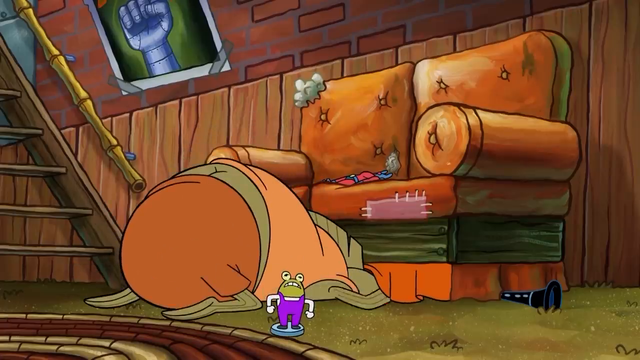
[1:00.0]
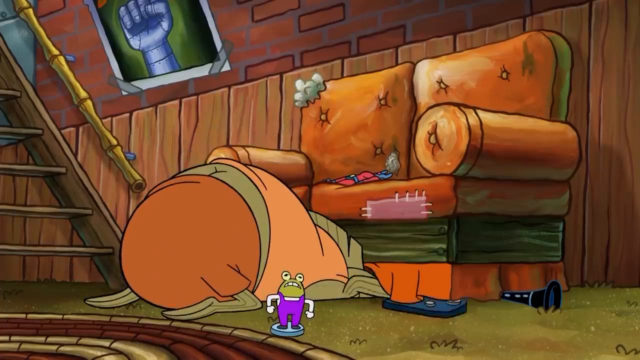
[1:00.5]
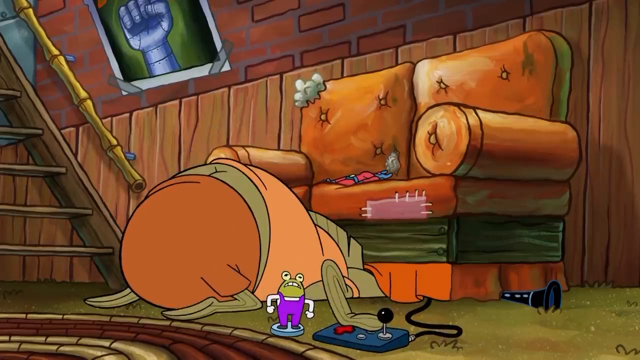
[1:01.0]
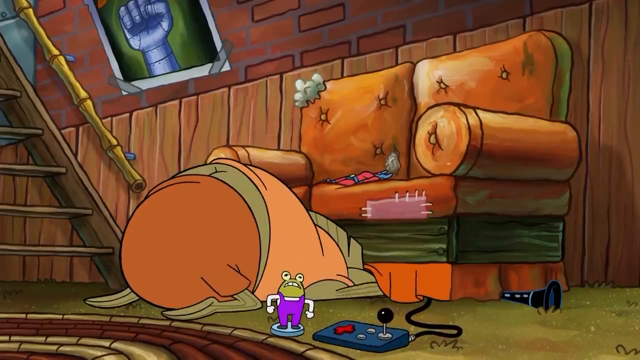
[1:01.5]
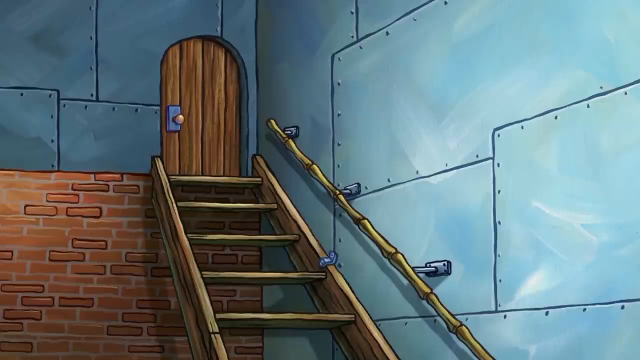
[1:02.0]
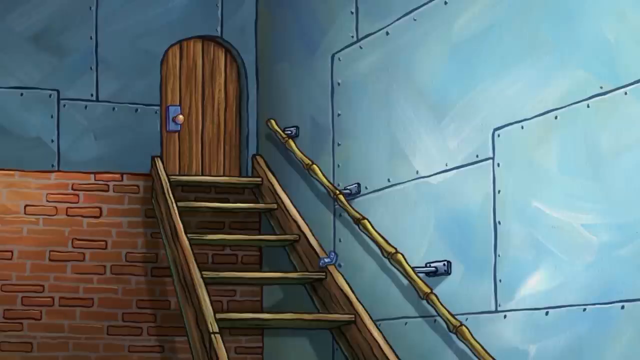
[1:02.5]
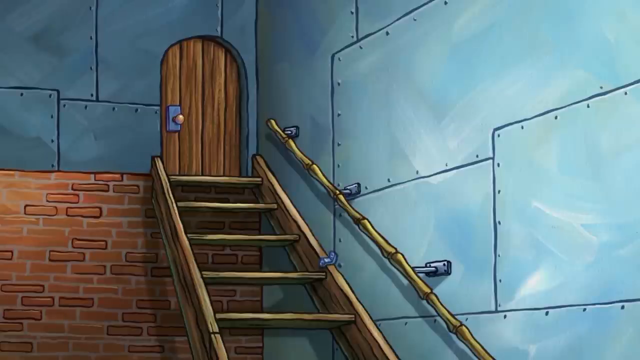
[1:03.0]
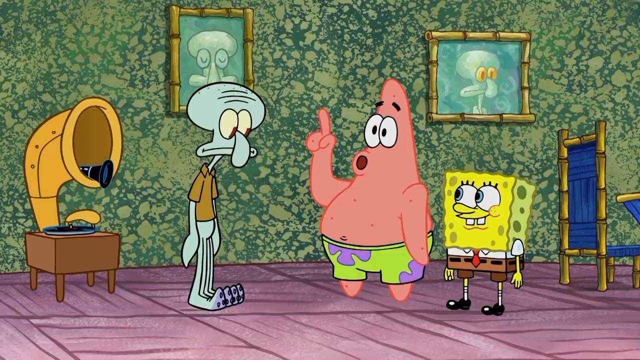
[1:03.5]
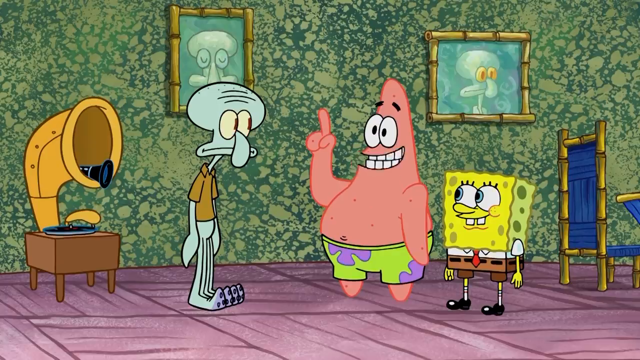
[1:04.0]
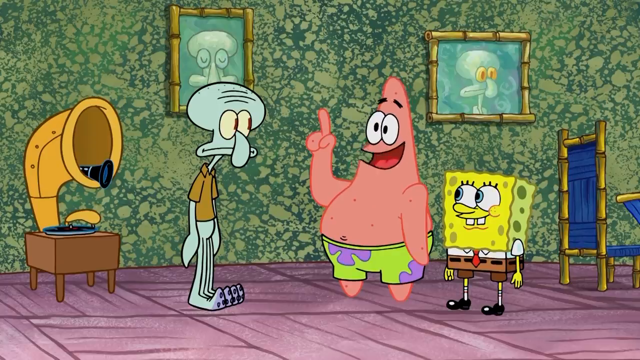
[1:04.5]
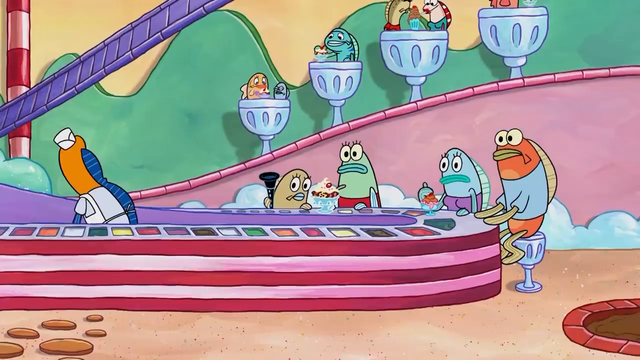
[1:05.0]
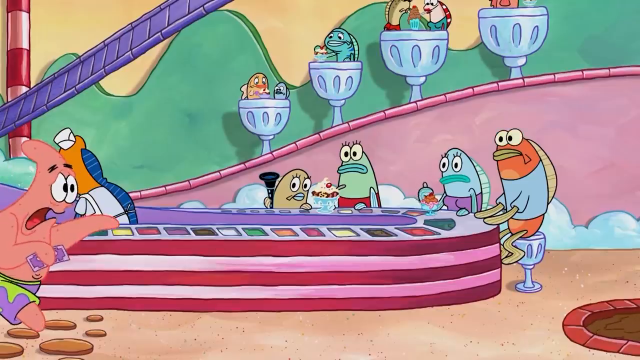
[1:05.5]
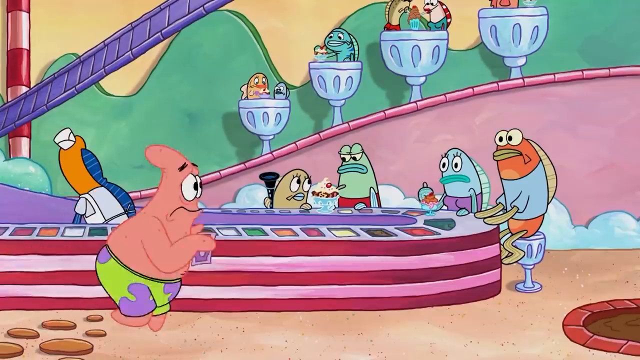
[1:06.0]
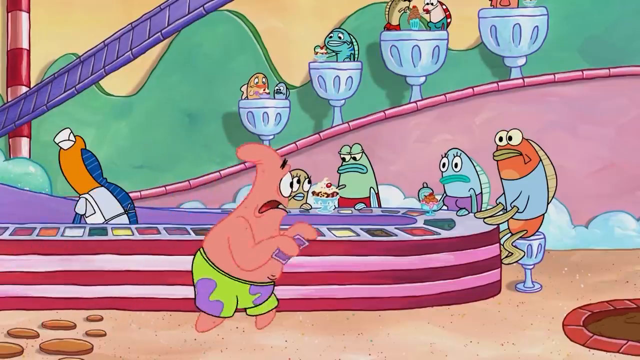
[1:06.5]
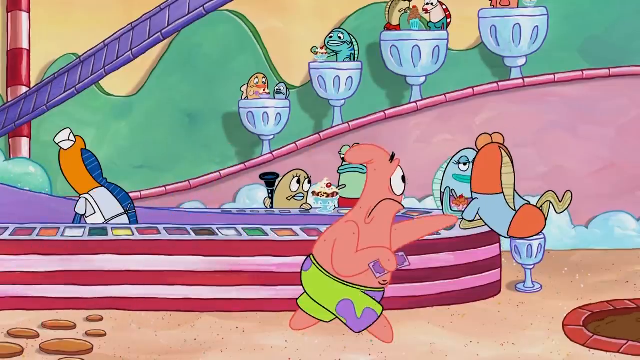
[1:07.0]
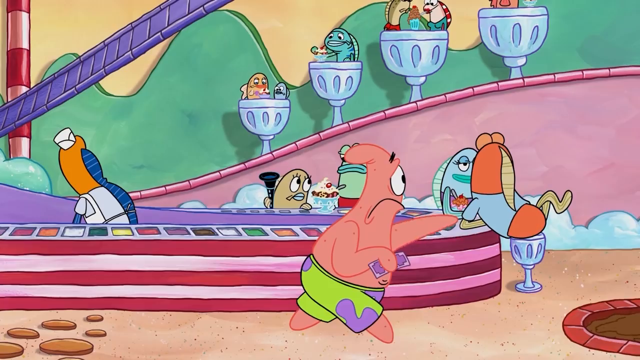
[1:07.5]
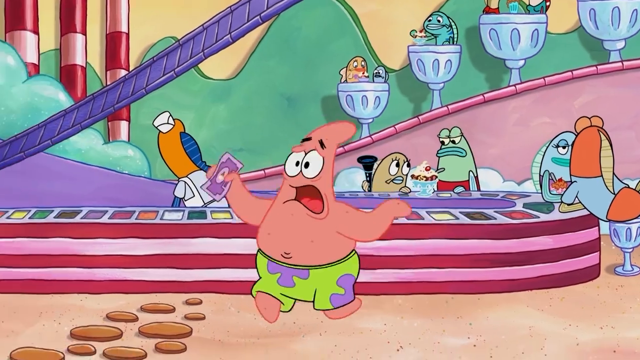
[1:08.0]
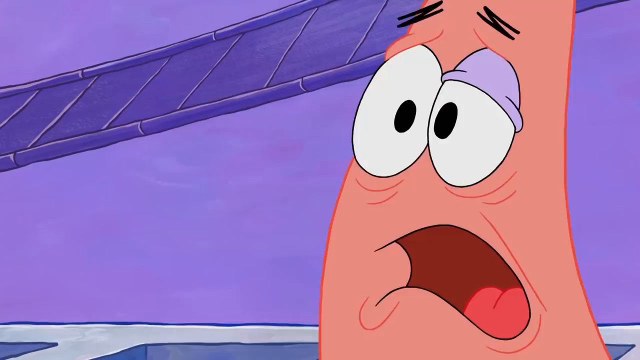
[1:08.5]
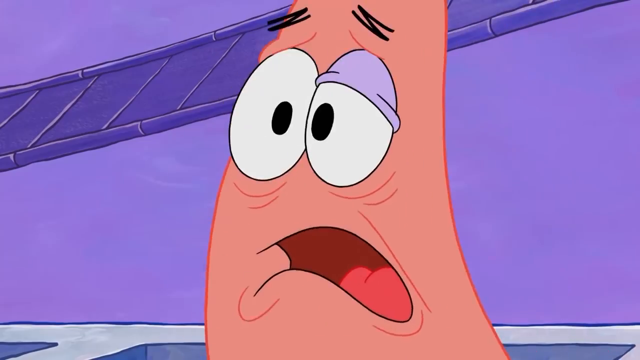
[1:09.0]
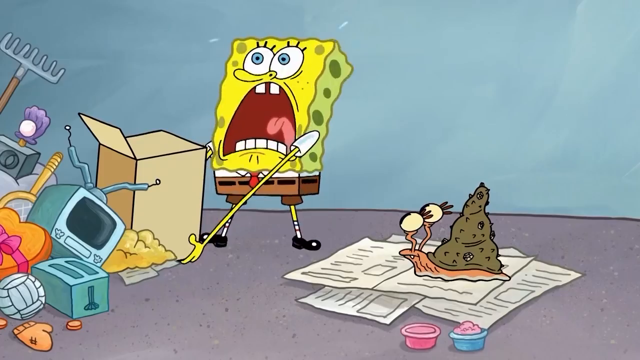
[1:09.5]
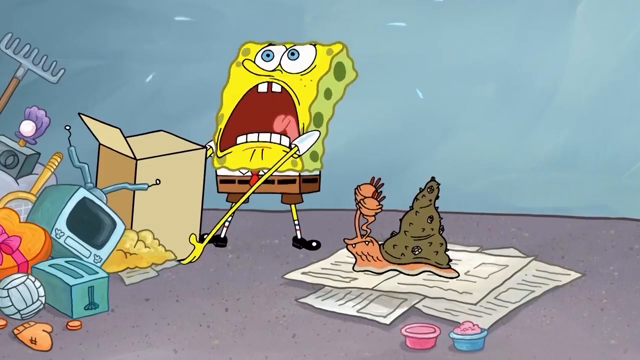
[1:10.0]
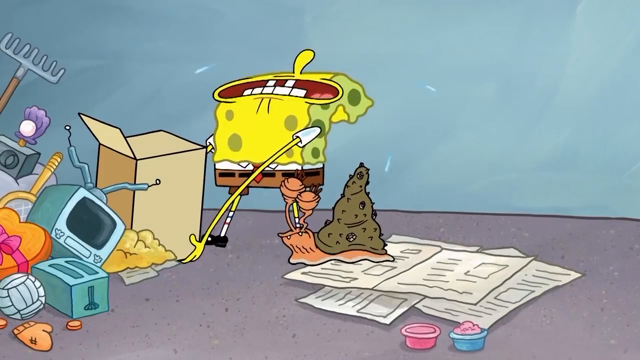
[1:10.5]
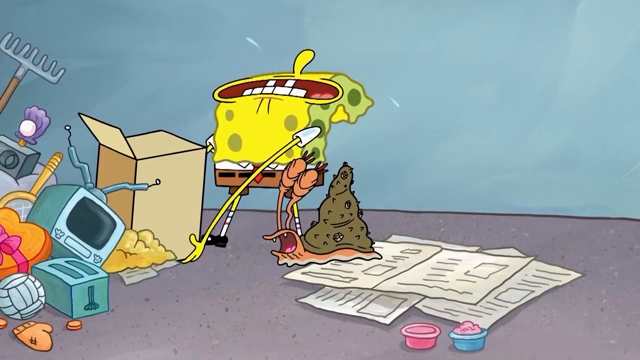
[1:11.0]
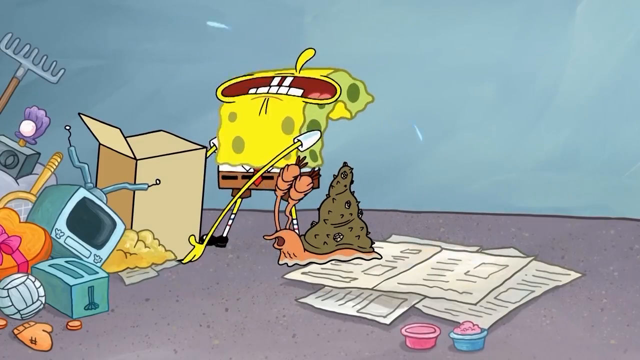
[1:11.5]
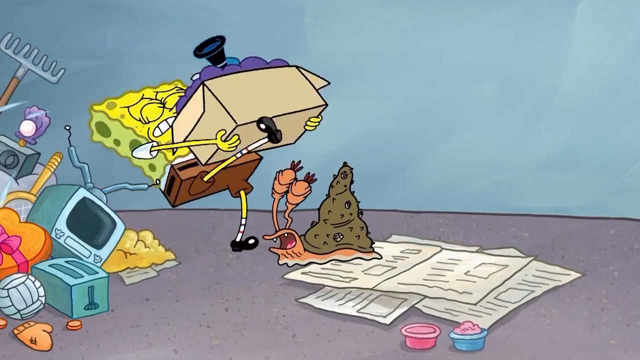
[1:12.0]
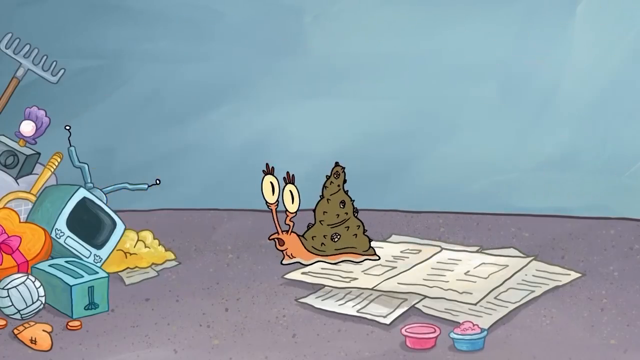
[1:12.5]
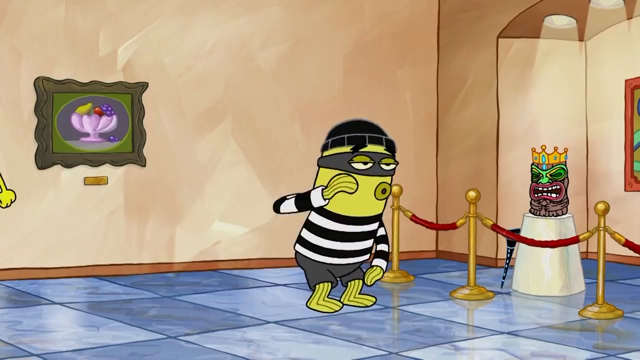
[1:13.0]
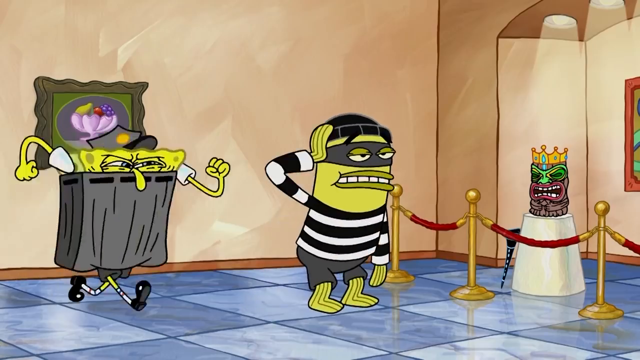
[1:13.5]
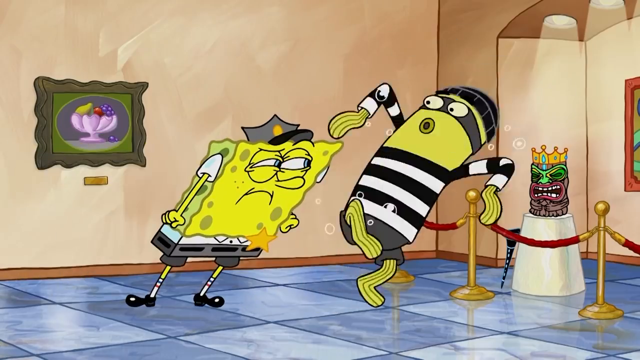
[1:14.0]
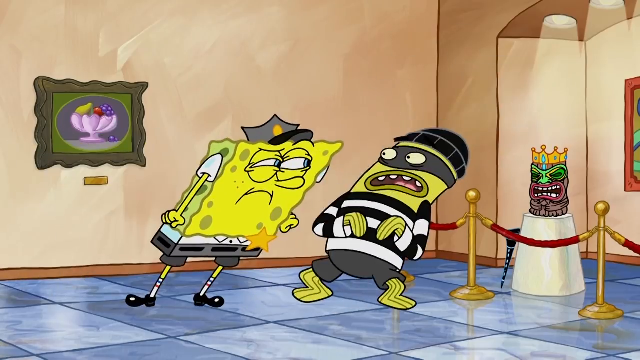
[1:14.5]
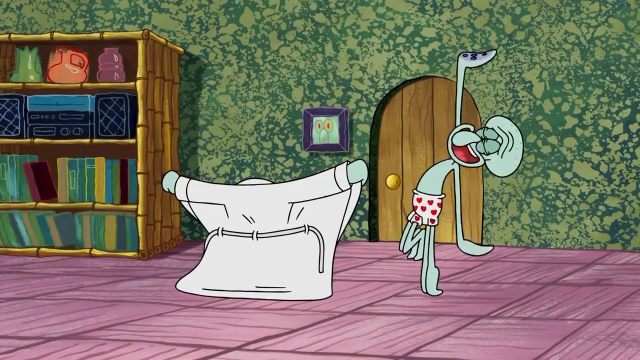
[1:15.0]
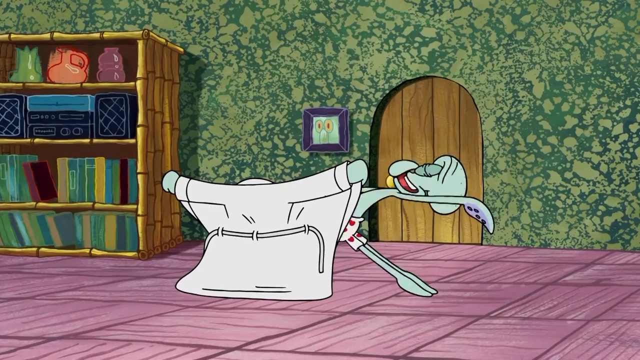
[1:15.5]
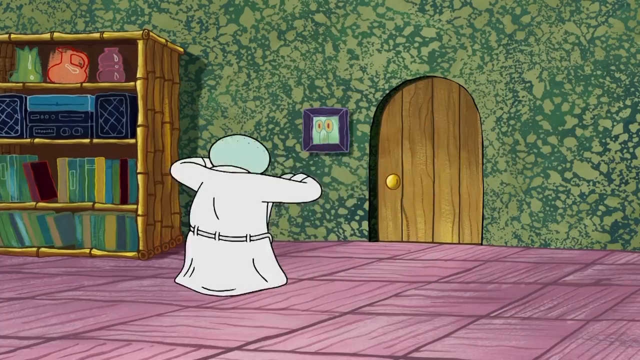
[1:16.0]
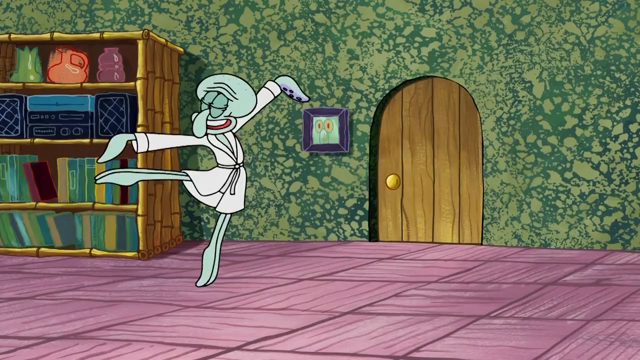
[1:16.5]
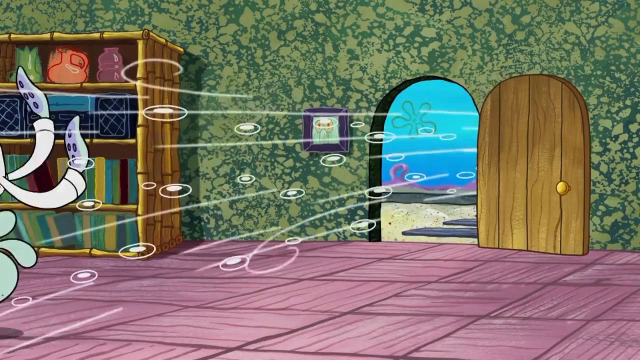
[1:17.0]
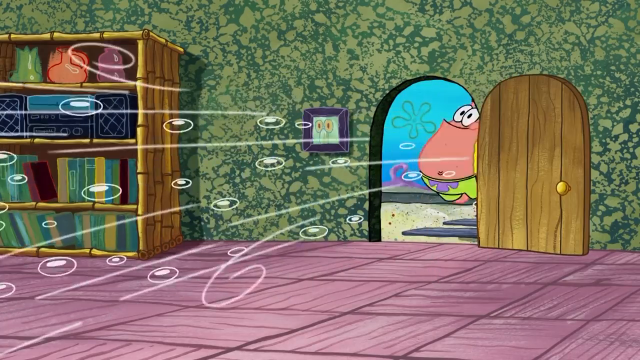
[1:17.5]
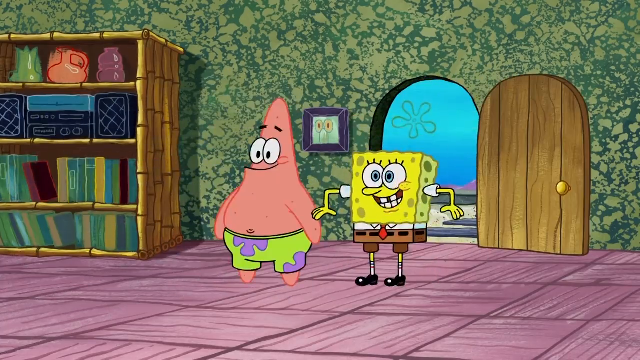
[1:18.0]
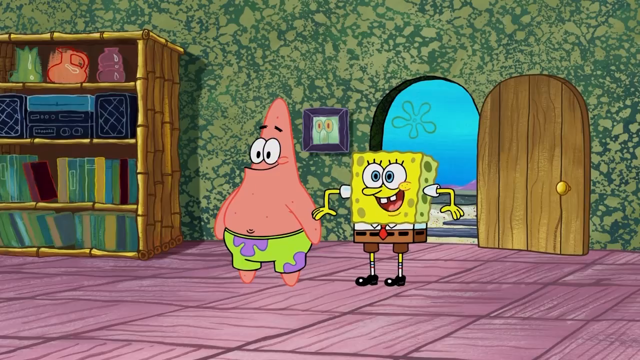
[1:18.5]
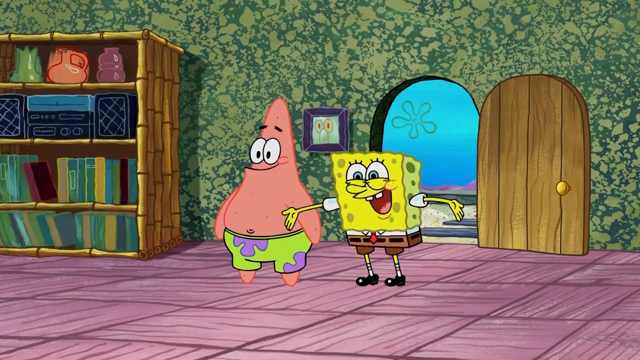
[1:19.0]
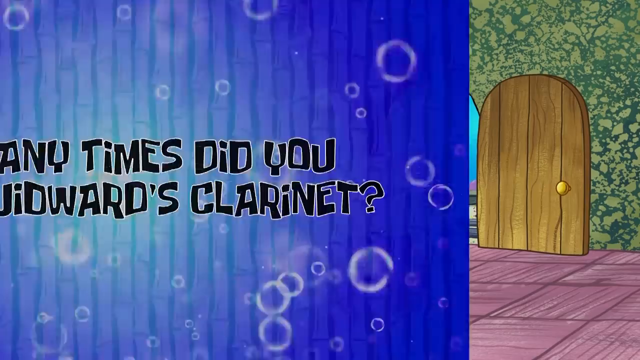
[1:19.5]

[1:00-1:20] A creature with green skin and fins on its back, wearing an orange shirt and brown pants, has its head buried underneath a couch and pulls items out, such as a video game controller. The couch is beaten up, with patches stitched onto it. To the left of the couch are stairs with a bamboo handrail leading up, as if this is a basement. Sticking out to the right of the couch is the clarinet. As the creature digs around, the view cuts to the top of the stairs, where a little white line appears as if someone is banging on the door. It cuts to Squidward, Patrick and SpongeBob in the dining room, where Patrick, with one finger raised, tells Squidward something. Next, Patrick runs sheepishly through a restaurant scene at a buffet bar and runs away with some money in his hand. Then SpongeBob tries to lift a box that is too heavy for him; he is really exasperated, finally lifts it, but trips over a snail near him. Next, SpongeBob wears a police officer's cap in a museum and sneaks up on a burglar in a black eye mask and a black-and-white striped shirt, who is scared by him. Then Squidward dances in a robe in his house, and the front door blows open from a gust of wind. Patrick and SpongeBob enter, all excited, and as they come through the door, a final transition slide reads "How many times did you spot Squidward's clarinet?"